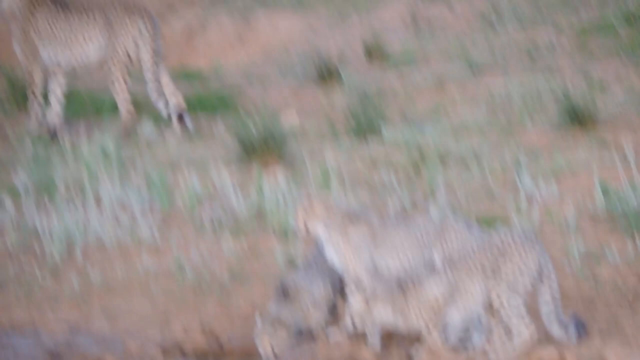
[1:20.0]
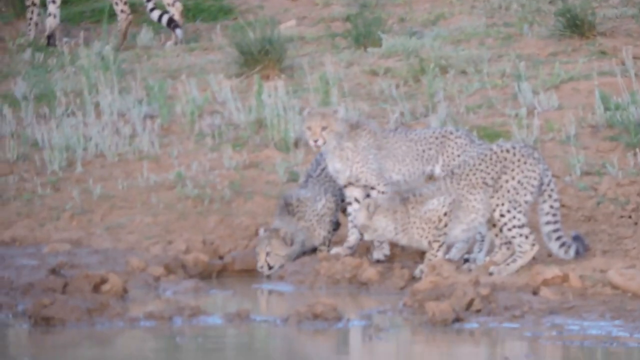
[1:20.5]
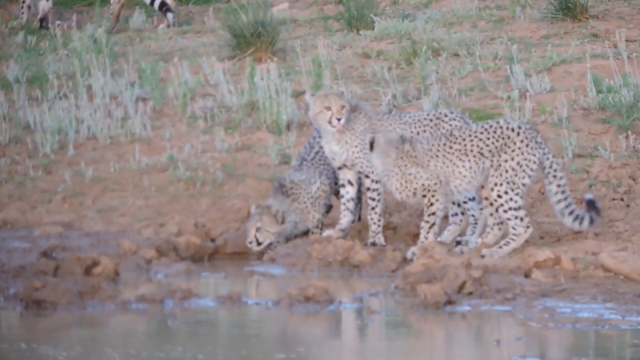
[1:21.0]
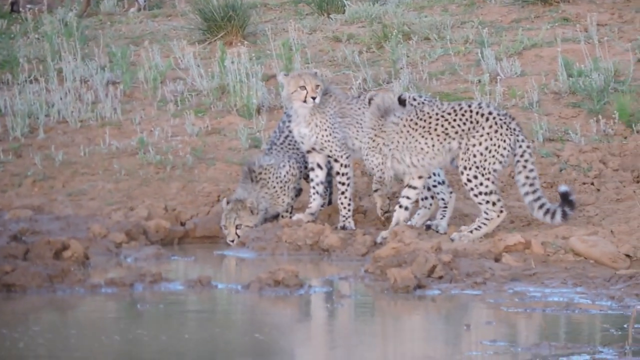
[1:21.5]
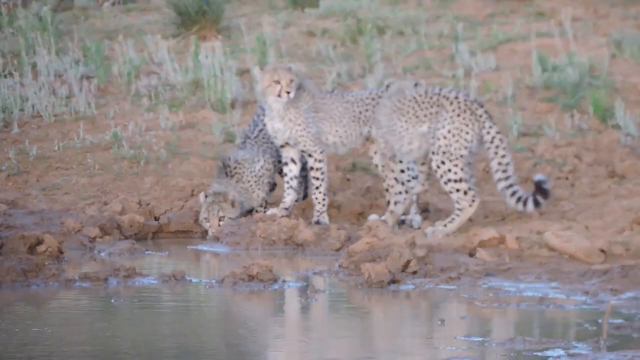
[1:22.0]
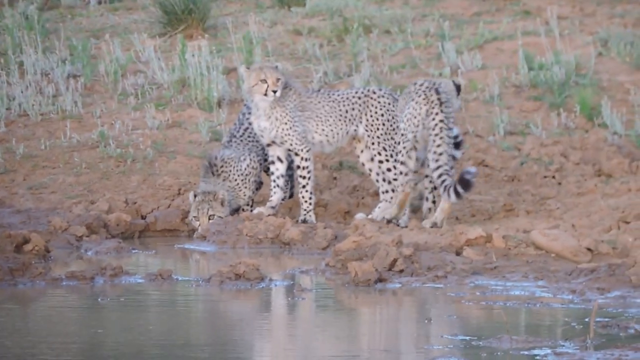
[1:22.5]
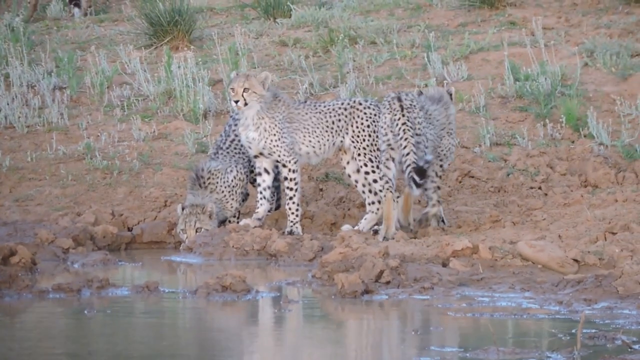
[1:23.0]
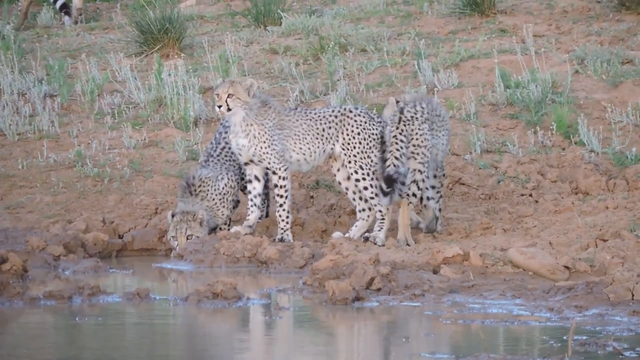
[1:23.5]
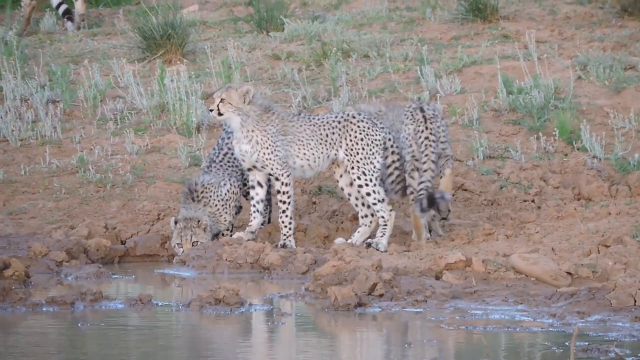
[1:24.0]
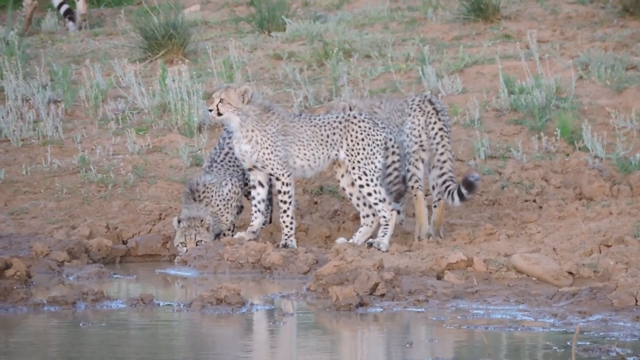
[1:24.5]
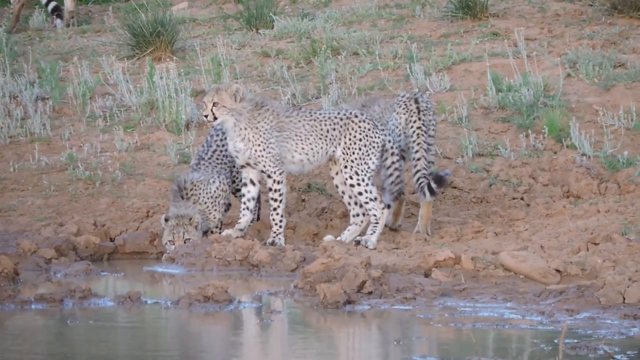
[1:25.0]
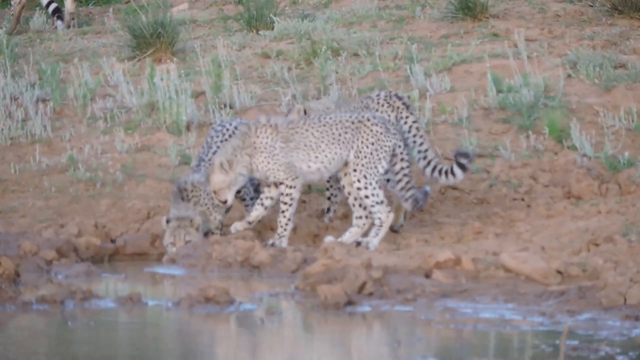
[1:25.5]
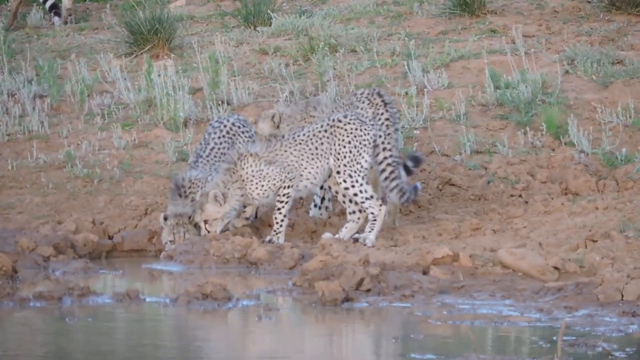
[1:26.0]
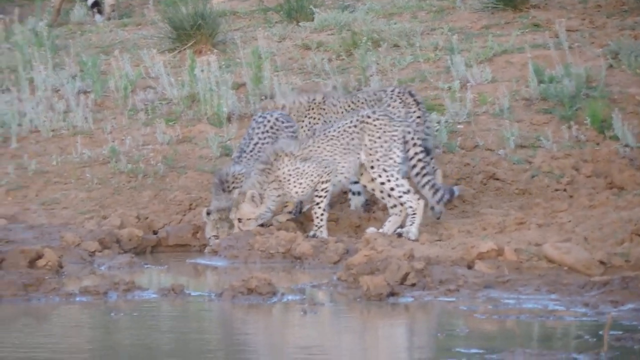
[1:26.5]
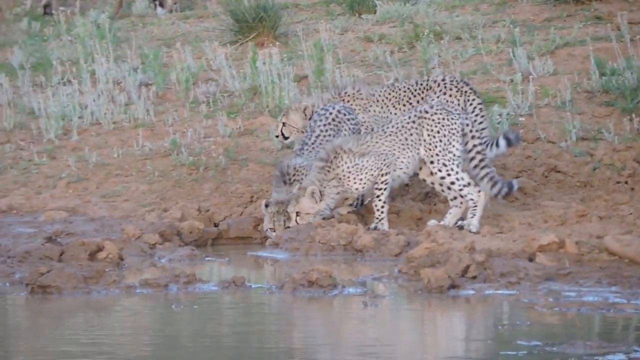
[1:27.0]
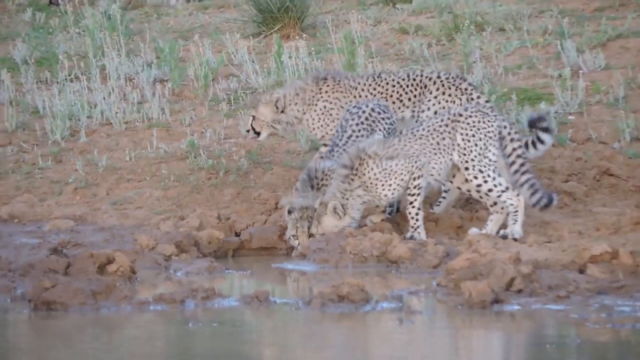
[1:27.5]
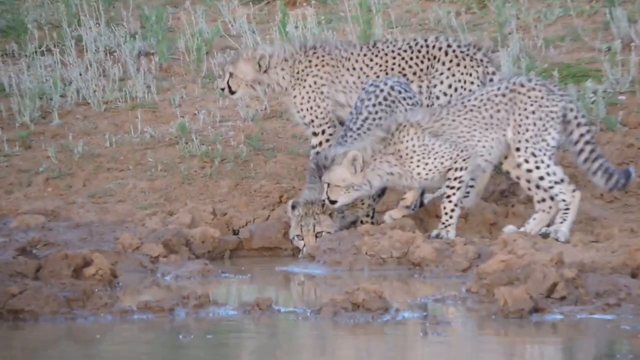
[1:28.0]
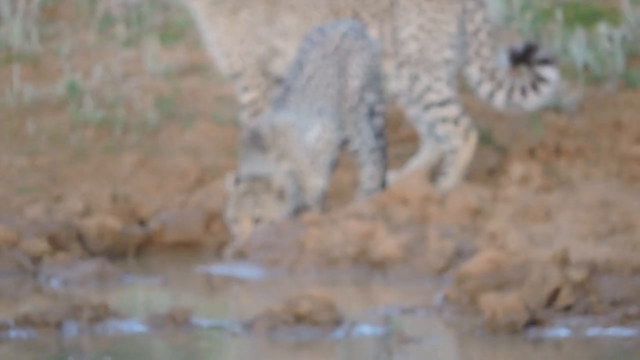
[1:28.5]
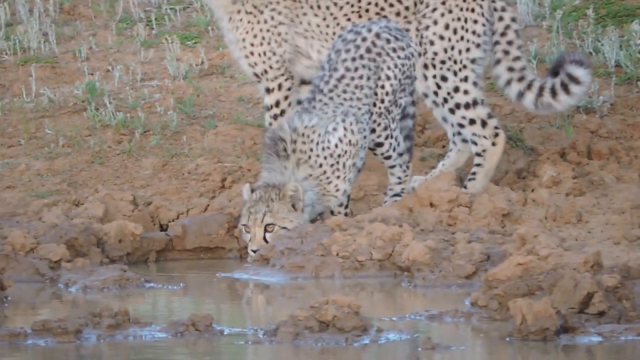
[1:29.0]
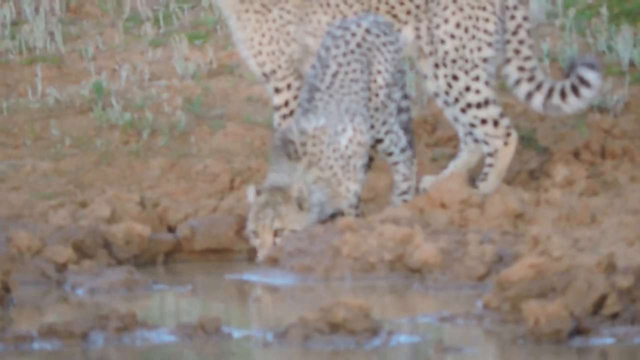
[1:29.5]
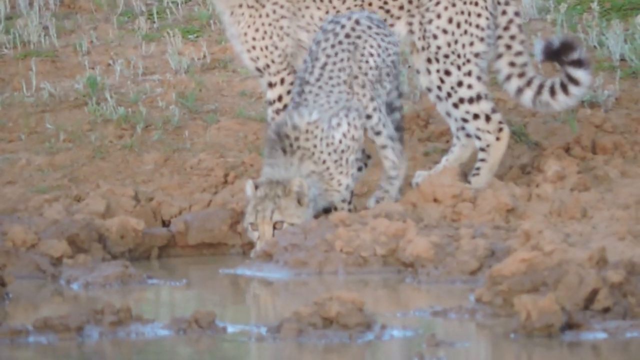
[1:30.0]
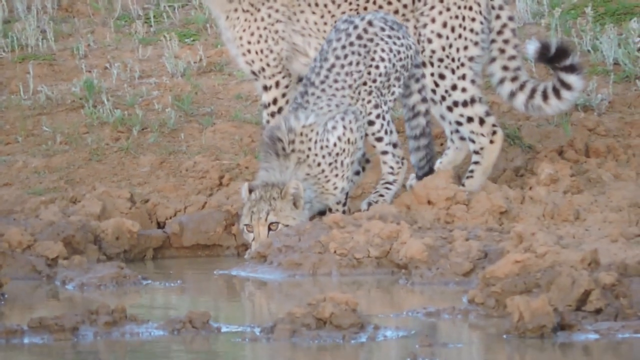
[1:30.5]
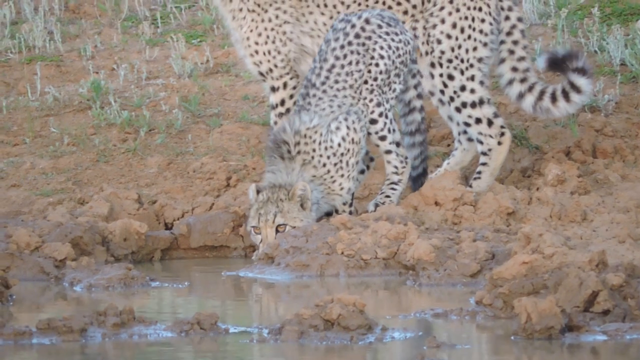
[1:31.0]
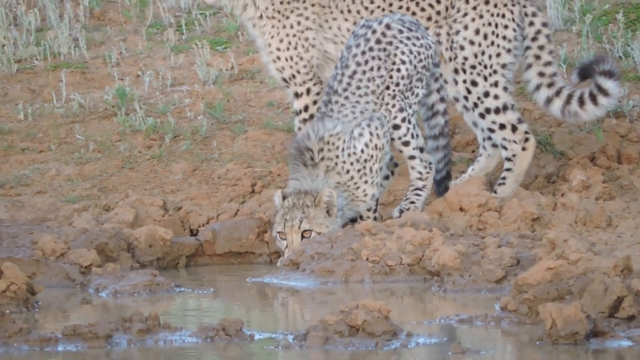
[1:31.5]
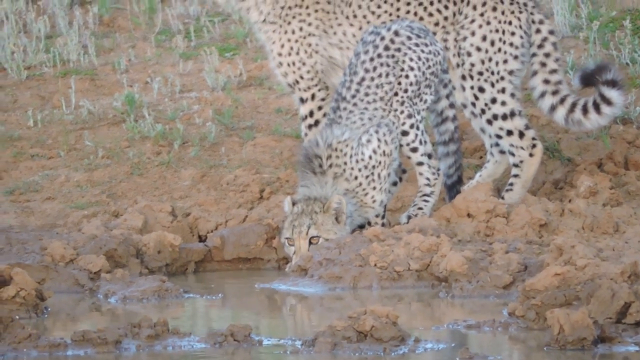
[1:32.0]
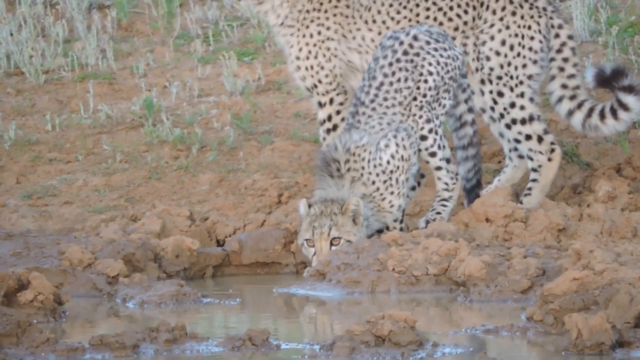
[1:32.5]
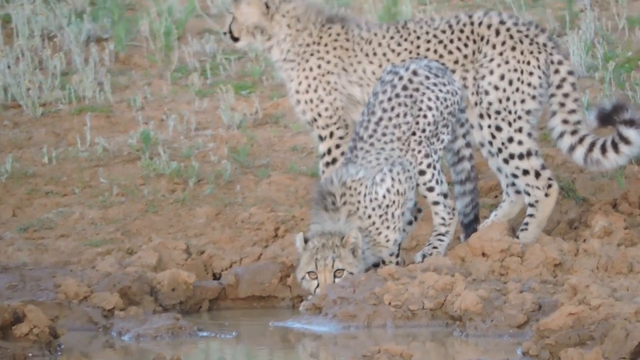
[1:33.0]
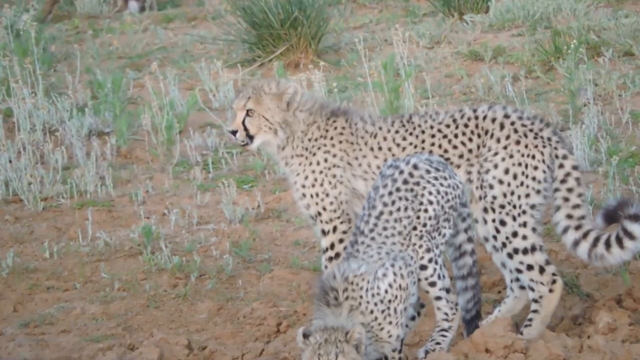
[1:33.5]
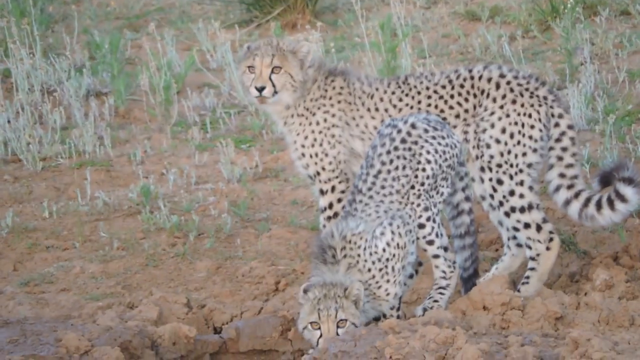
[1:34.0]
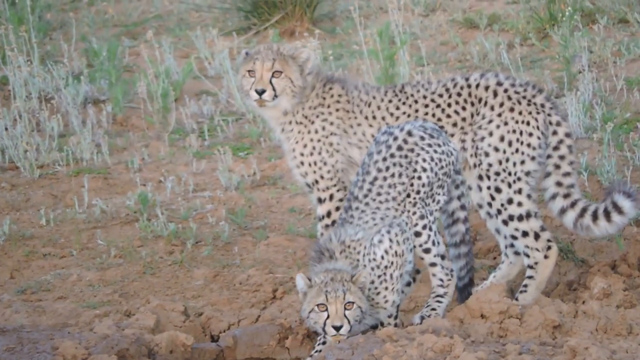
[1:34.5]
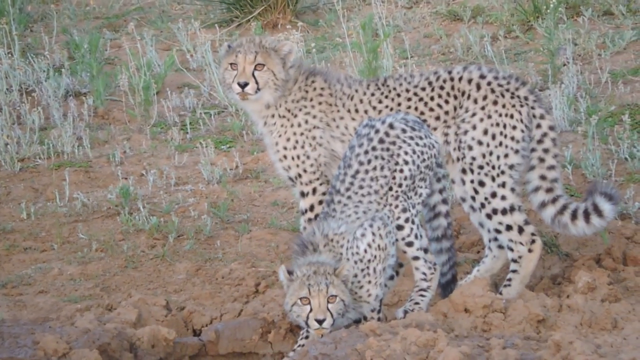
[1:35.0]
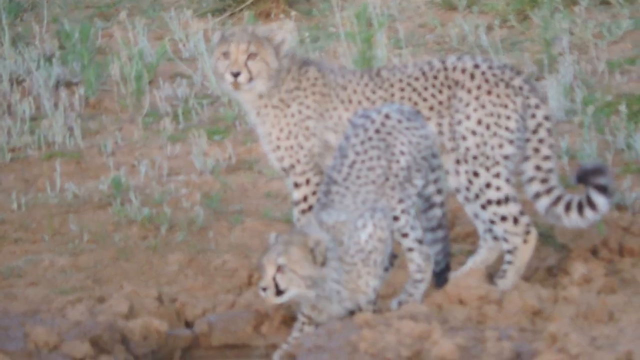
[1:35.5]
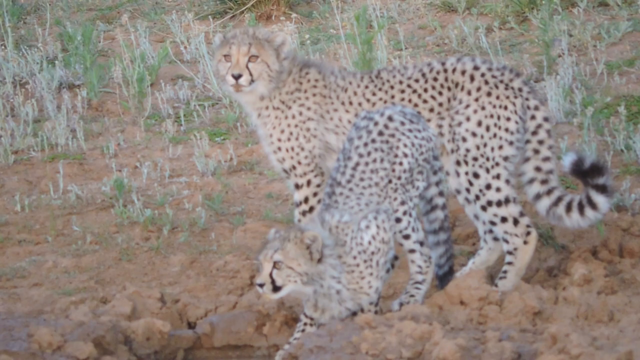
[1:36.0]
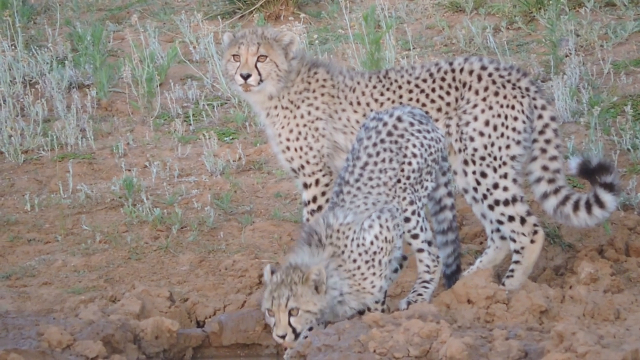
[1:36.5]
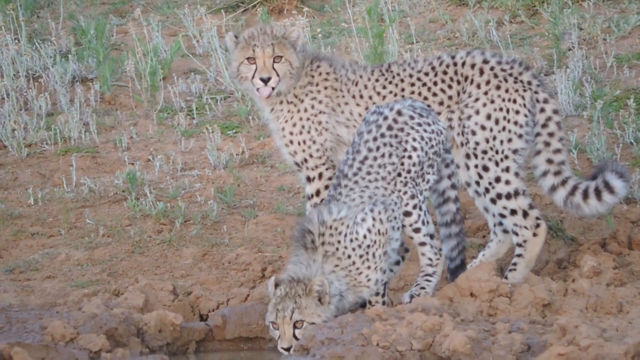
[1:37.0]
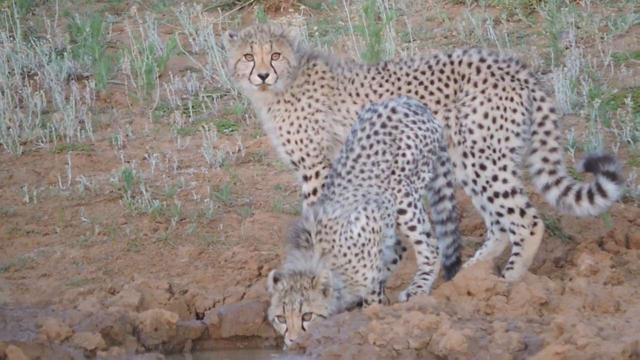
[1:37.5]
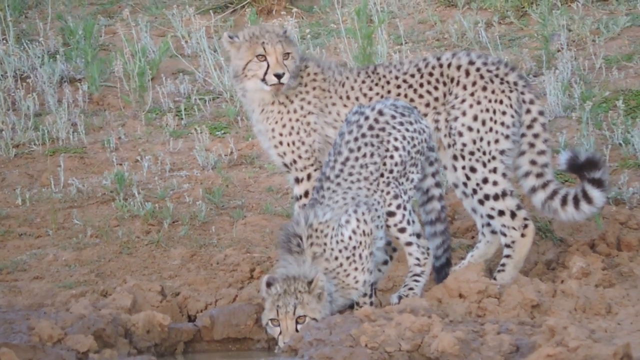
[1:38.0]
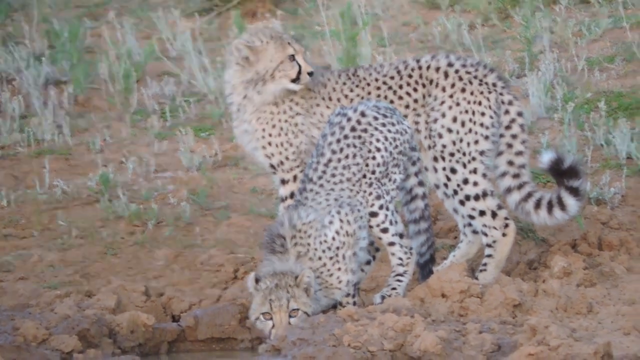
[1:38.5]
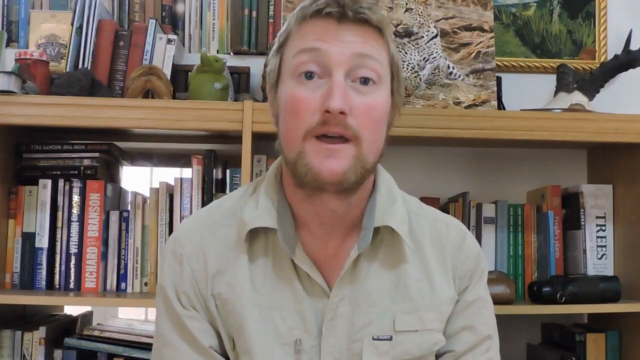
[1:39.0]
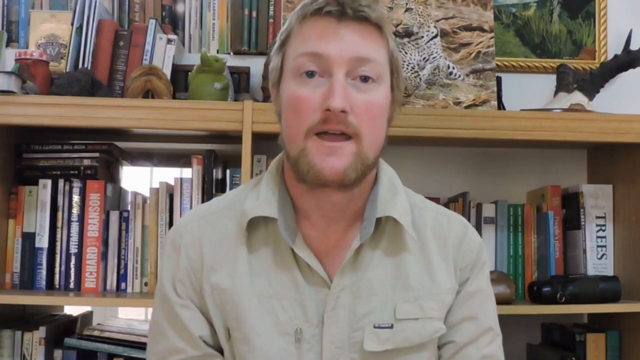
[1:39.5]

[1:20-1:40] The biggest one, possibly the mother, is still looking towards the left side of the screen. The scene then changes to a man talking; he appears to be wearing some type of greenish shirt, and a bookcase is briefly visible behind him.